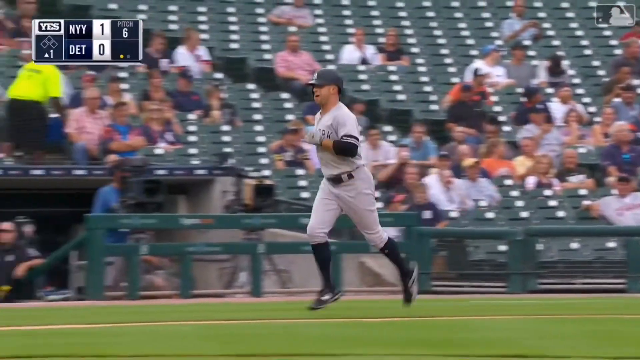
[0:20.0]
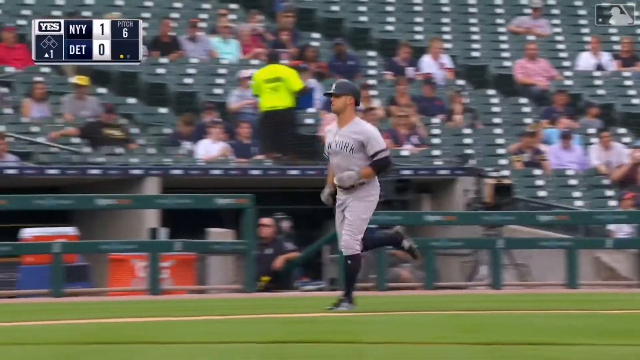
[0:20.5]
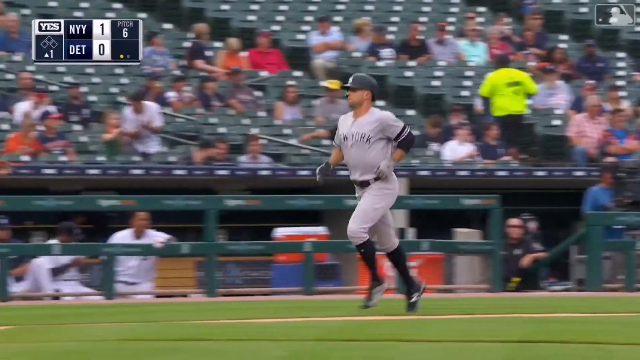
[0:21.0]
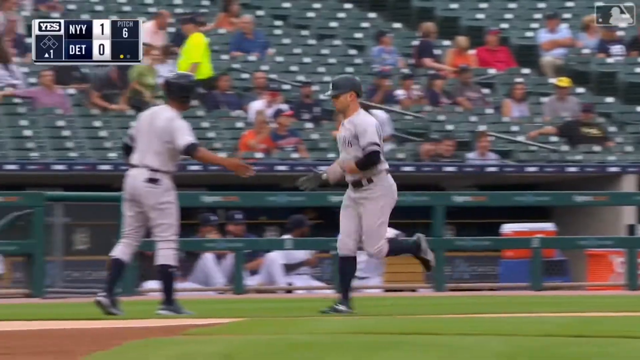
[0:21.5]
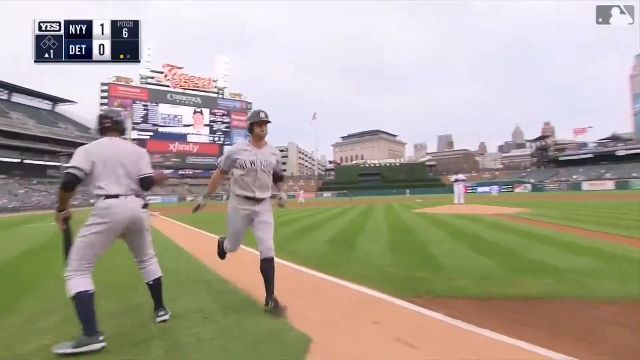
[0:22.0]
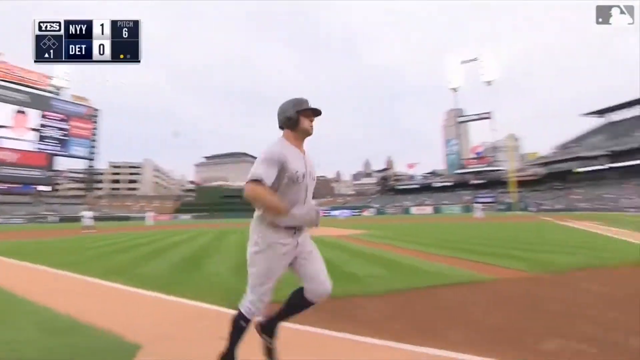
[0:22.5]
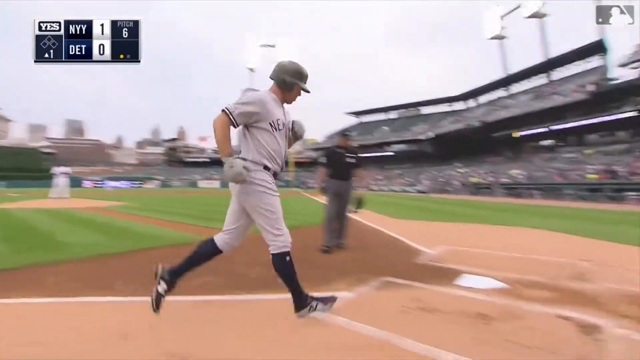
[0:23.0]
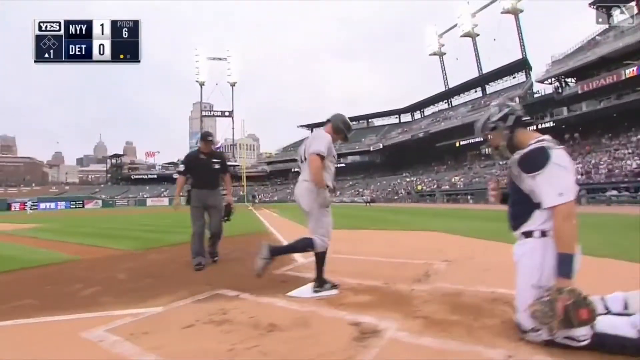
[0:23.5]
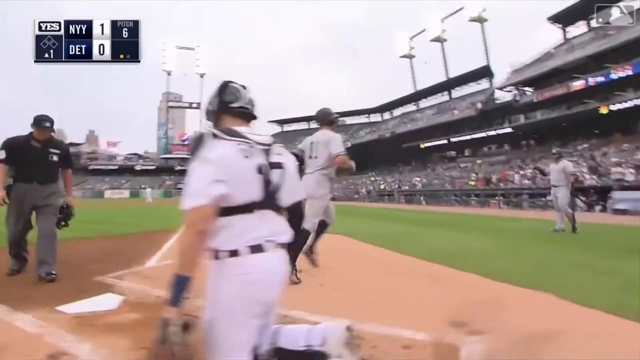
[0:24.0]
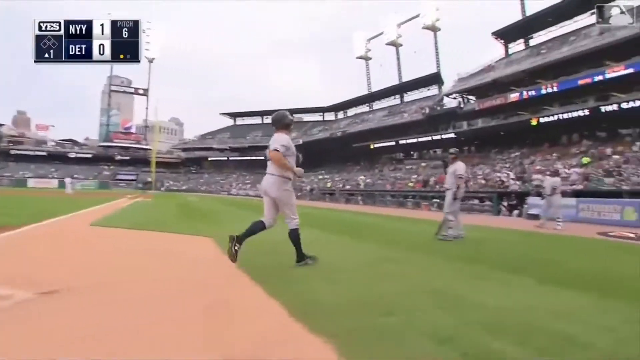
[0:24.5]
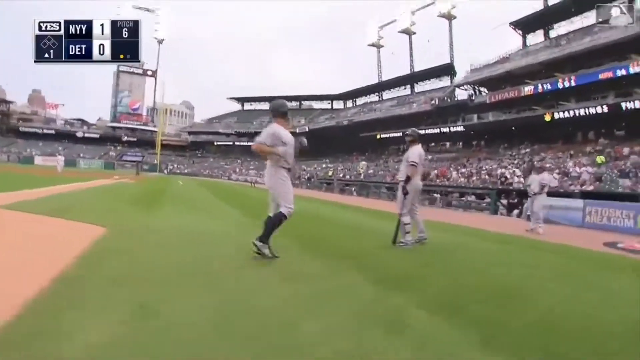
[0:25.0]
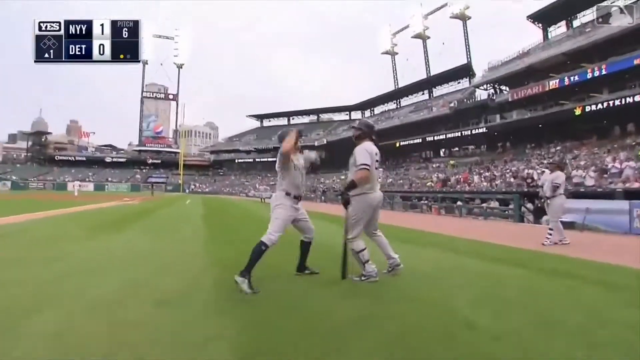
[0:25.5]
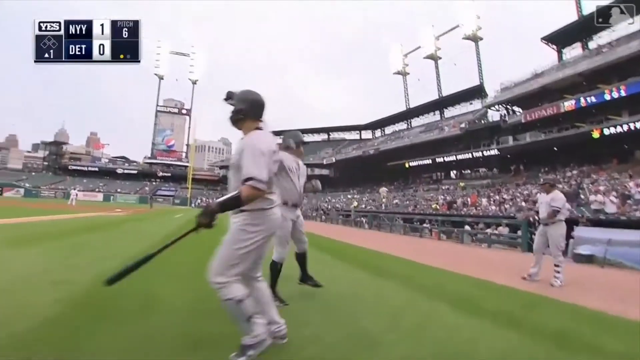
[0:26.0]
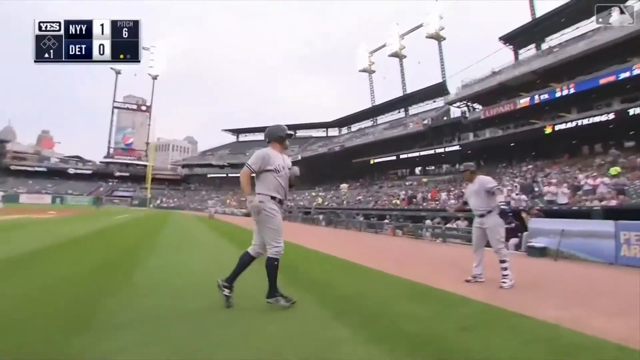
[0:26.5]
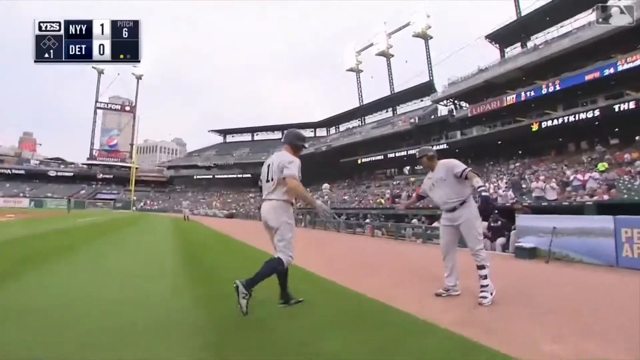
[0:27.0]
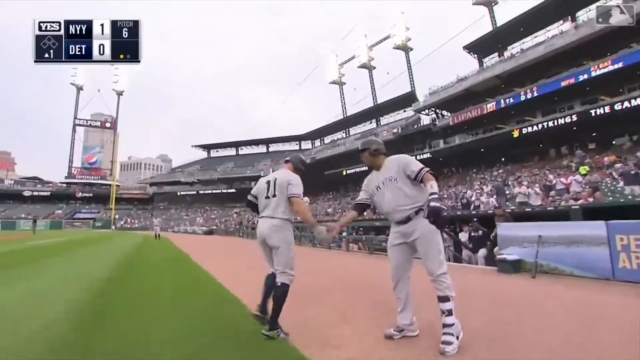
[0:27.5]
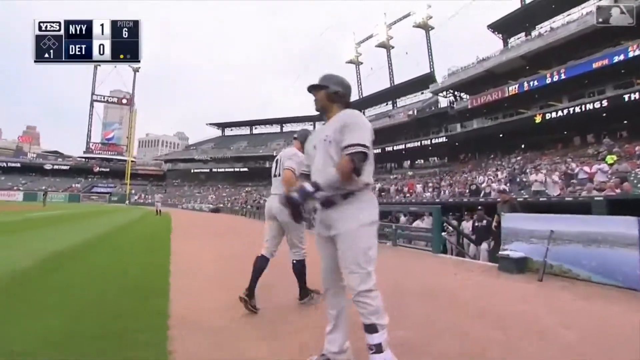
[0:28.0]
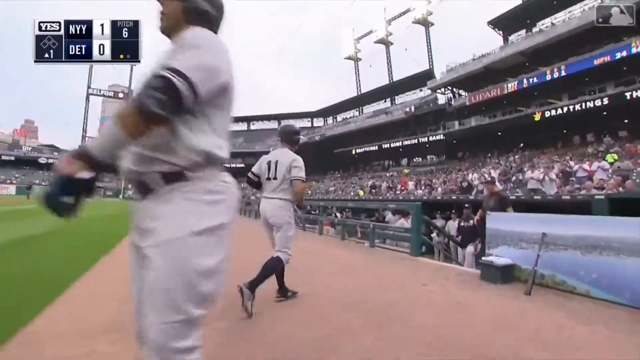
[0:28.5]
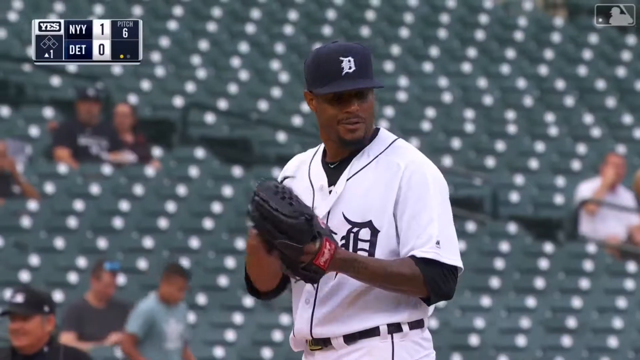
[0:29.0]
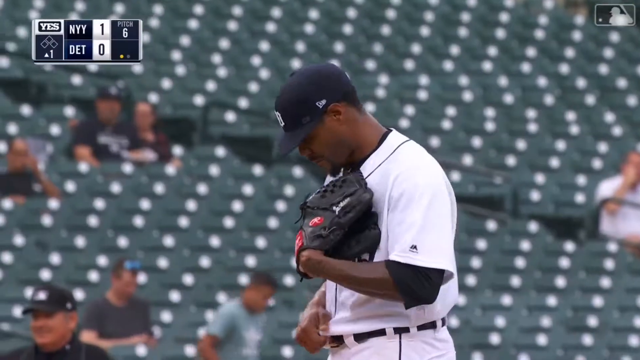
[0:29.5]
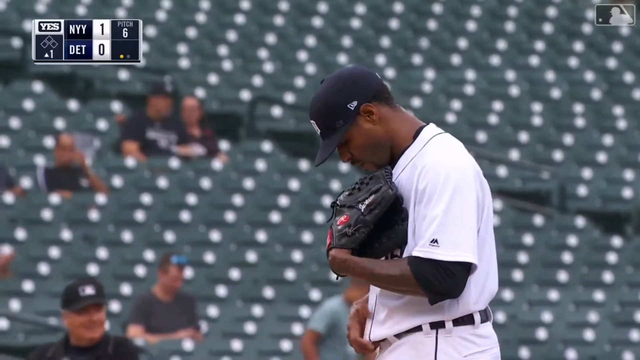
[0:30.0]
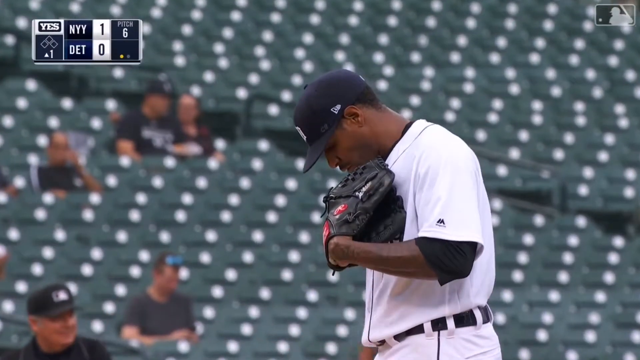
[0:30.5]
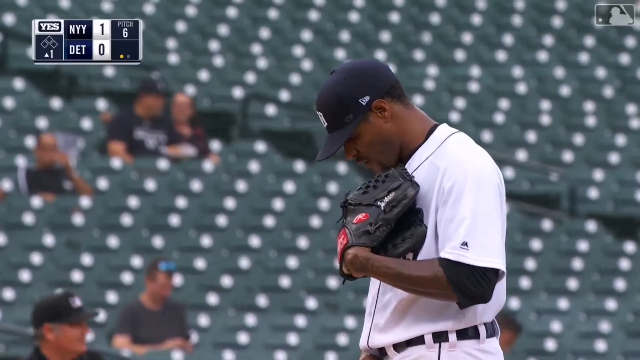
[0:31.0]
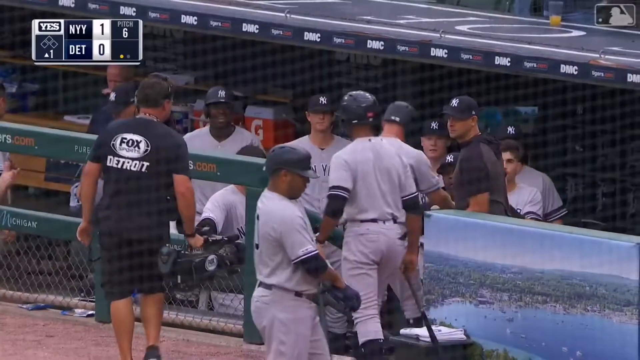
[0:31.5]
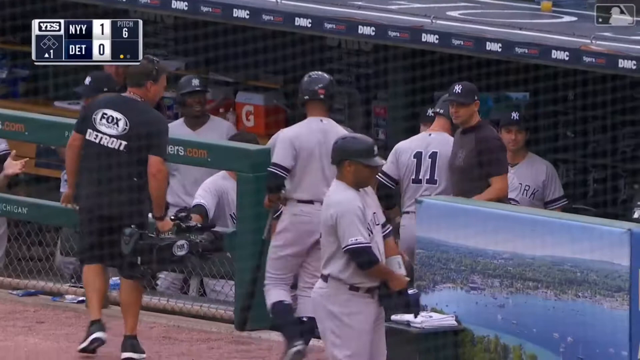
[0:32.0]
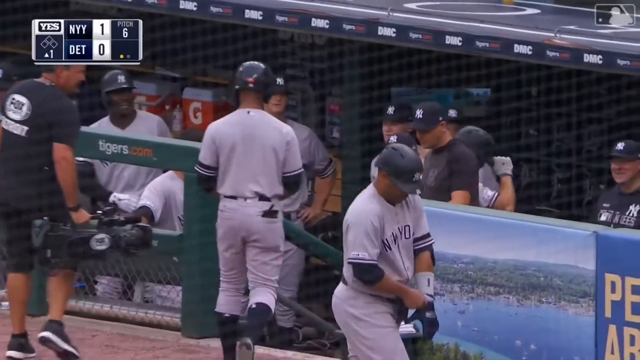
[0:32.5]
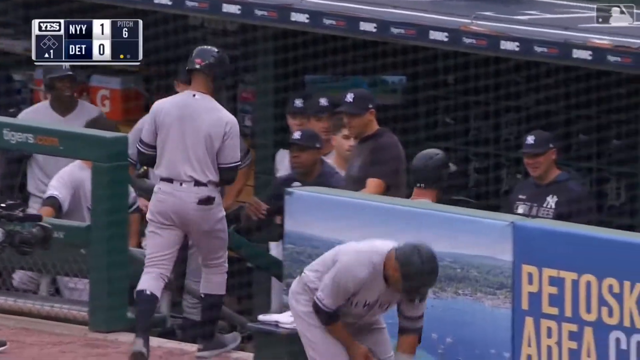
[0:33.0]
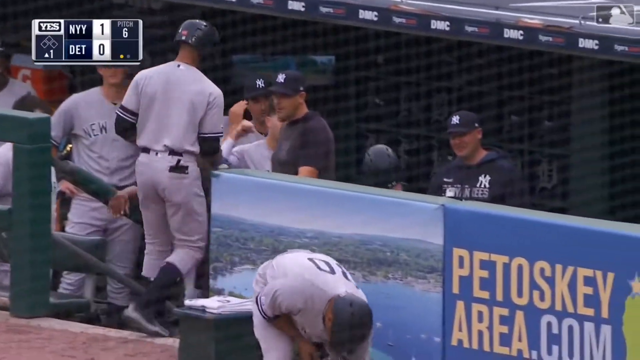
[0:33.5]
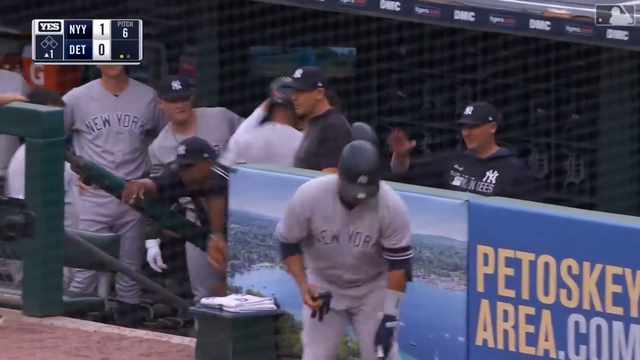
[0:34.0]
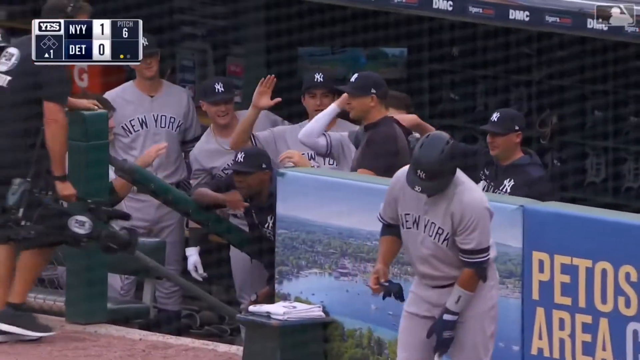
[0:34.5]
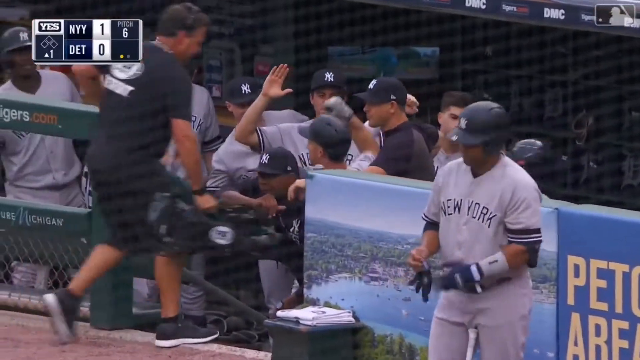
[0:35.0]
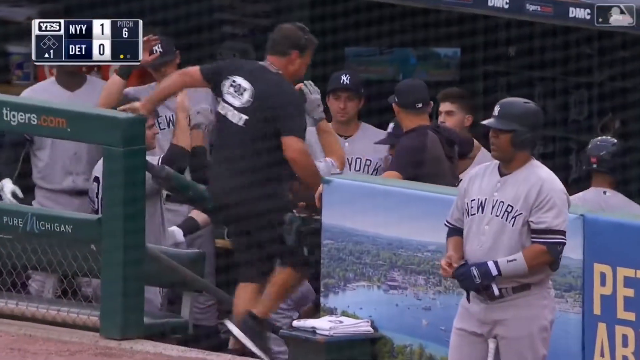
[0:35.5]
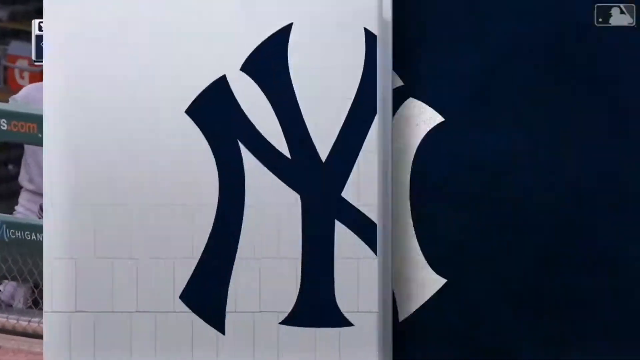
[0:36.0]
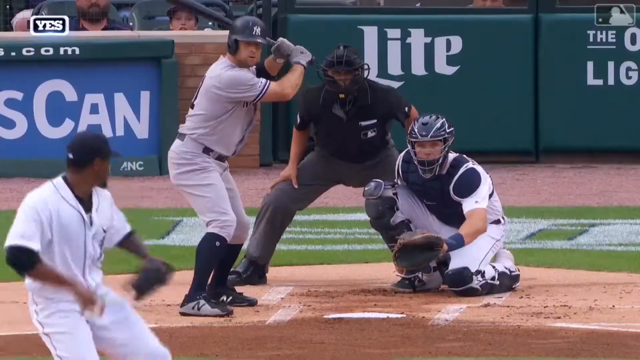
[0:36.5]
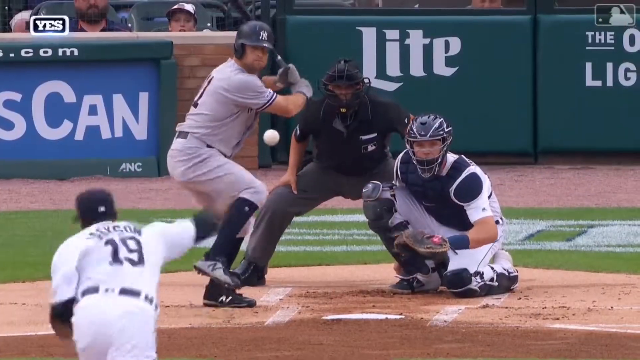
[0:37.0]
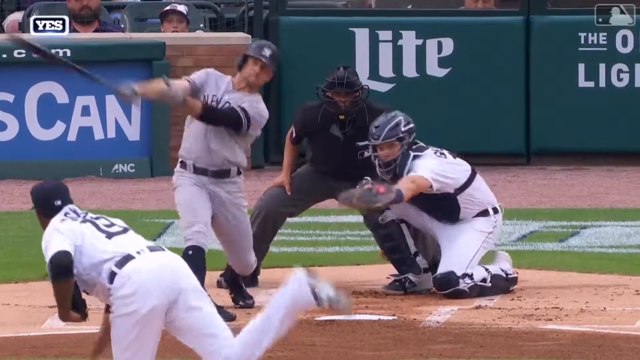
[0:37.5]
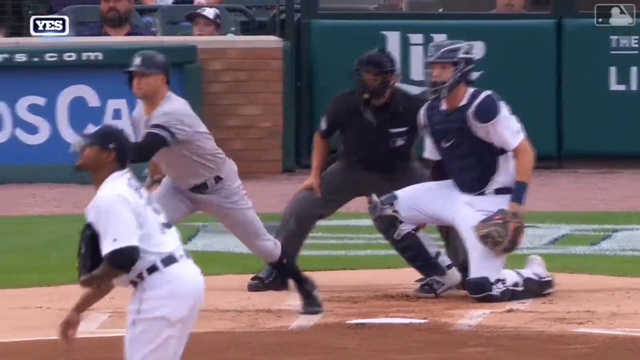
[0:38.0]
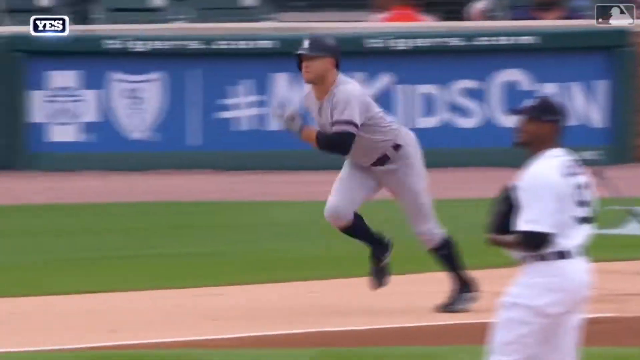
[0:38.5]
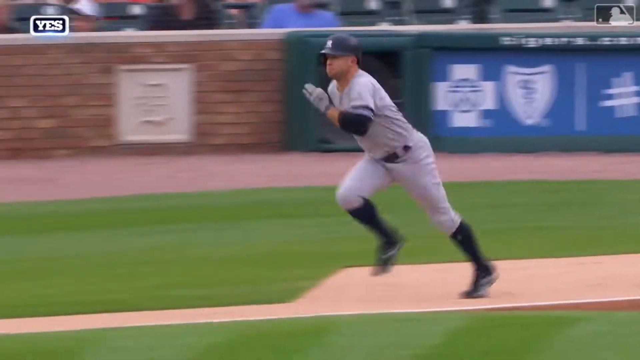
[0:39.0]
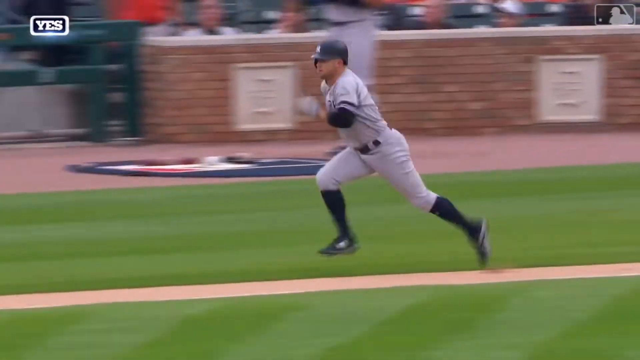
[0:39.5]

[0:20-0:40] The player wearing the New York jersey jogs across the field toward home base. He gives a teammate a high five with his right hand, and the teammate, who seems to be African American, also uses his right hand. He then approaches another teammate; both are wearing helmets, the teammate holds a bat in his left hand, and they both seem to jump at the same time as they high-five. The camera pans to the same player giving another teammate a high five, then goes back to the pitcher, who seems to be in a low-energy mood after the pitch. Back at the cage, a person wears a t-shirt that says "Fox Sports" with "Detroit" underneath. Many players seem to be smiling, giving each other high fives and cheering on the player who hit the home run. A replay then shows exactly what happened, with him sprinting as fast as he can toward home base.